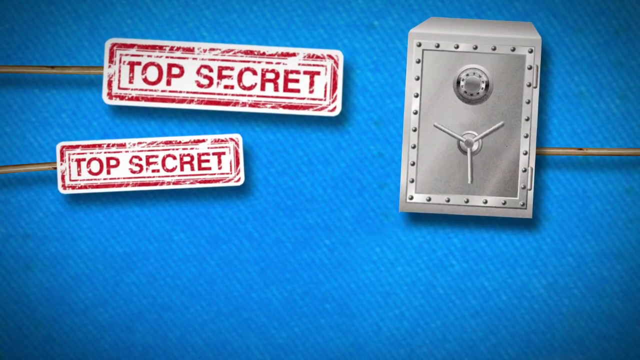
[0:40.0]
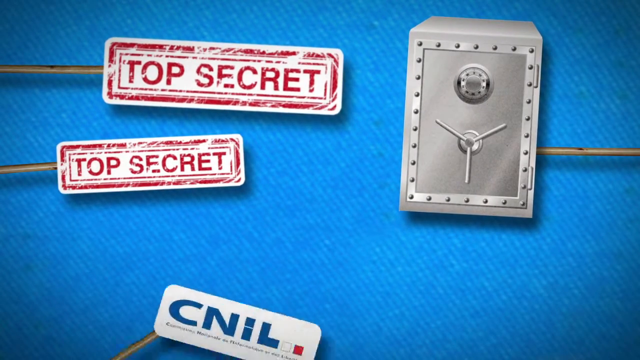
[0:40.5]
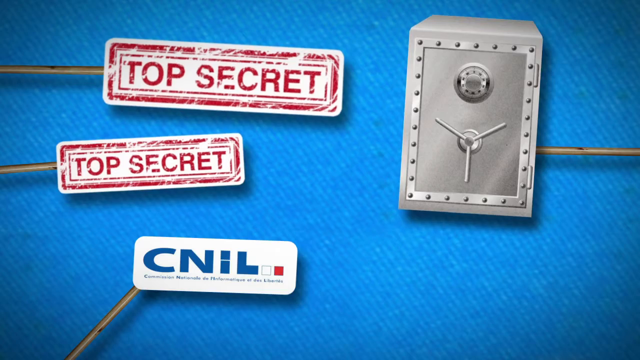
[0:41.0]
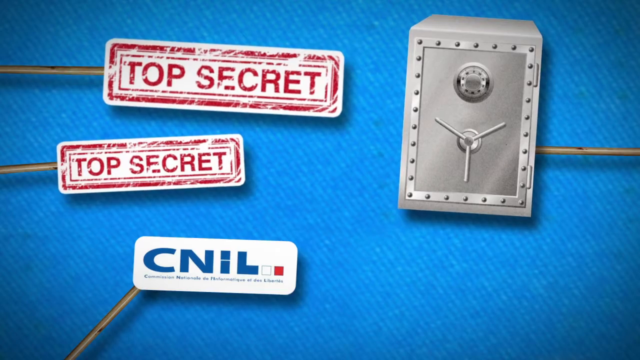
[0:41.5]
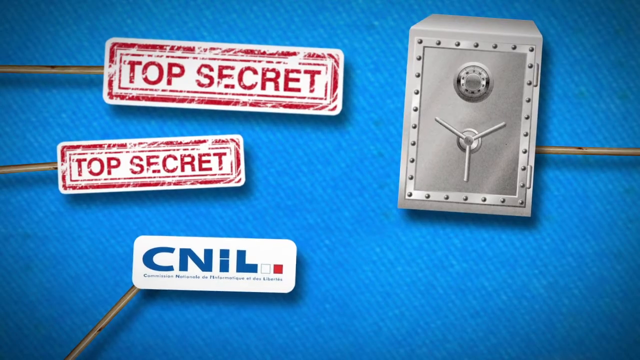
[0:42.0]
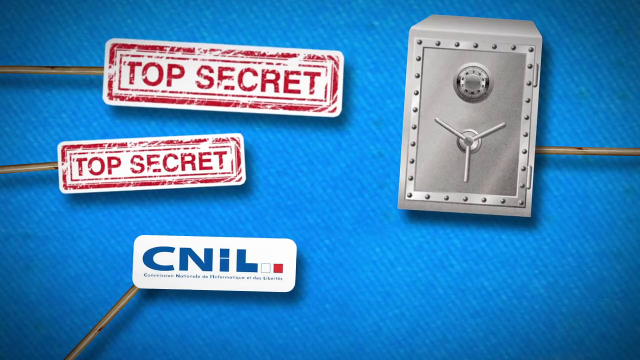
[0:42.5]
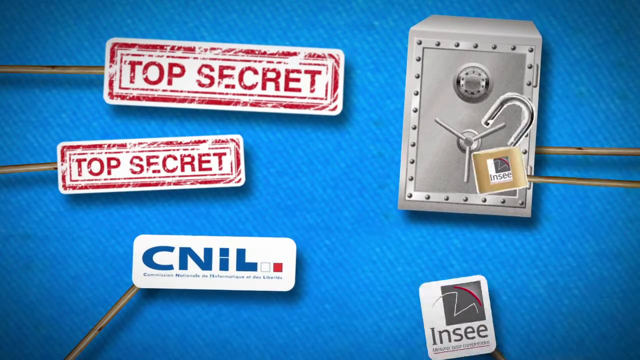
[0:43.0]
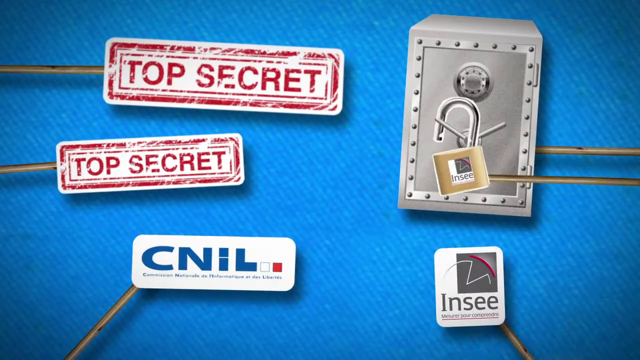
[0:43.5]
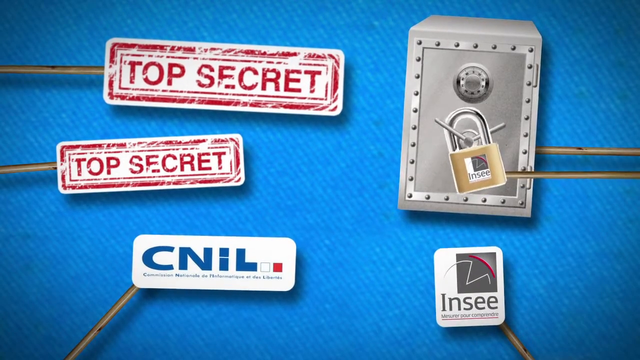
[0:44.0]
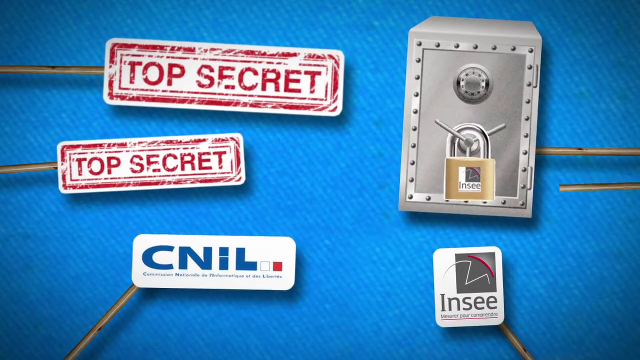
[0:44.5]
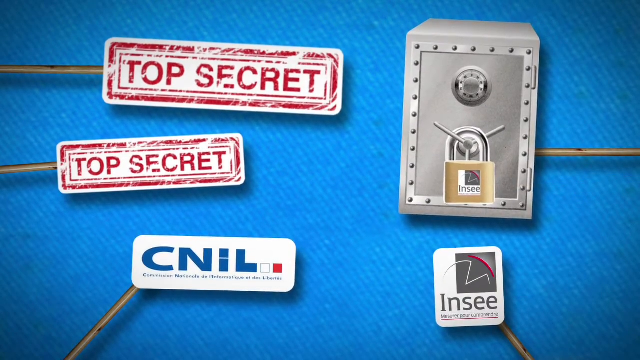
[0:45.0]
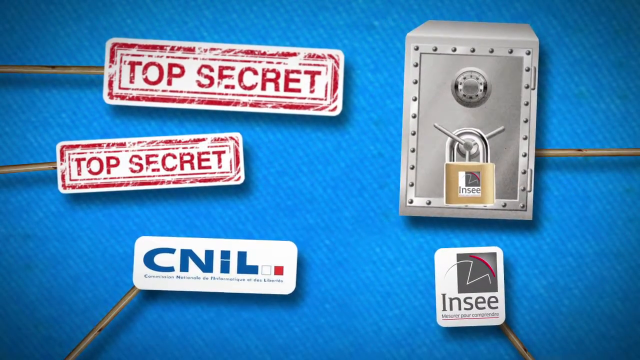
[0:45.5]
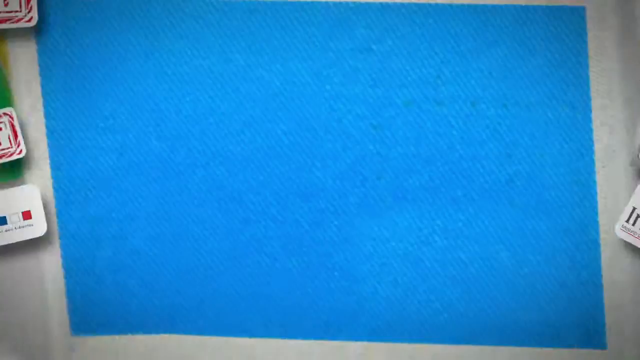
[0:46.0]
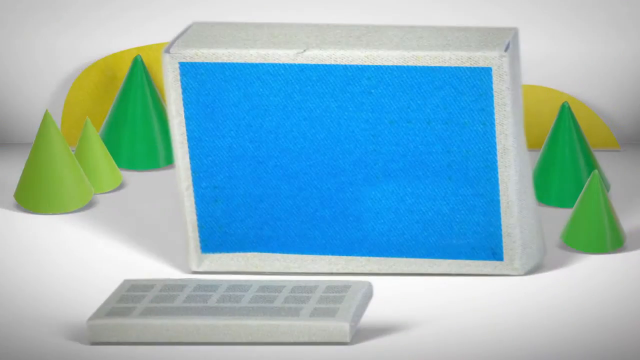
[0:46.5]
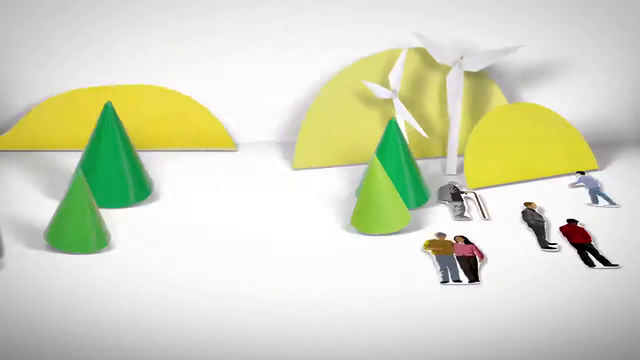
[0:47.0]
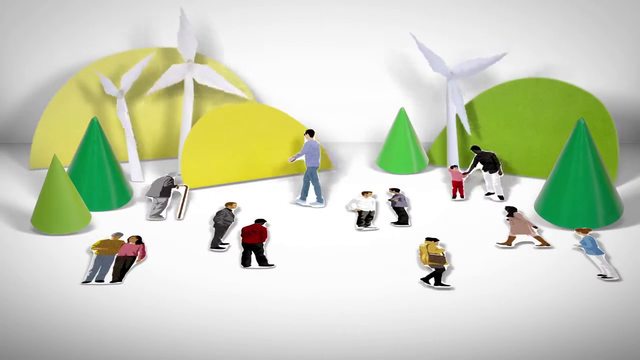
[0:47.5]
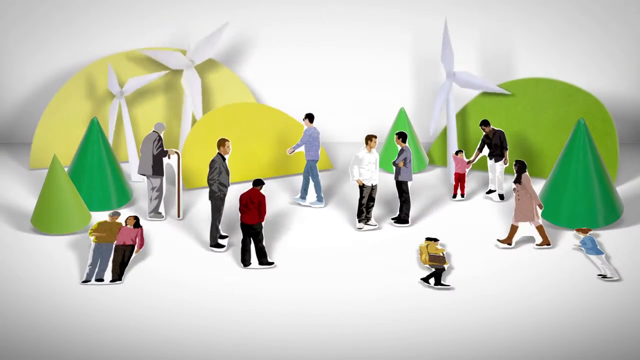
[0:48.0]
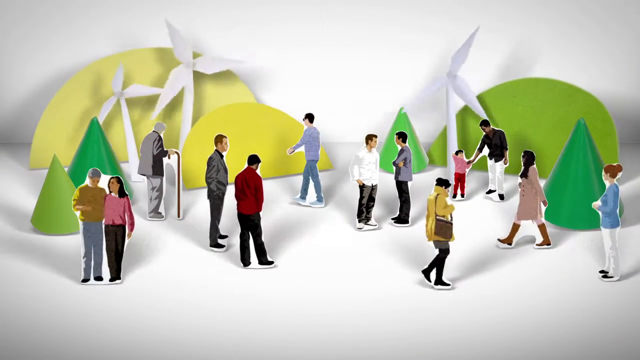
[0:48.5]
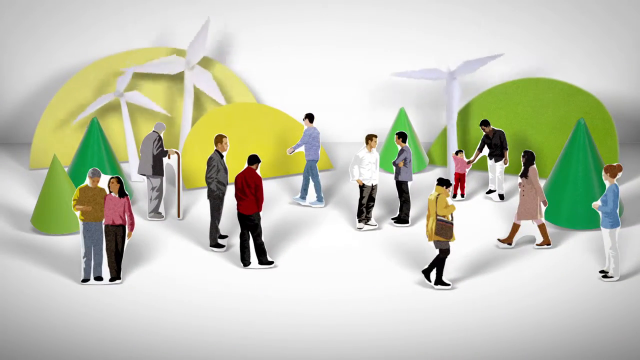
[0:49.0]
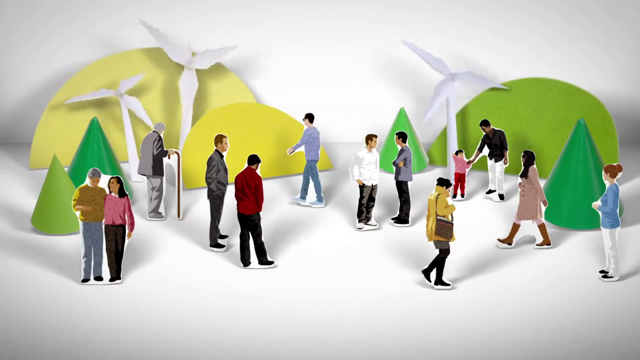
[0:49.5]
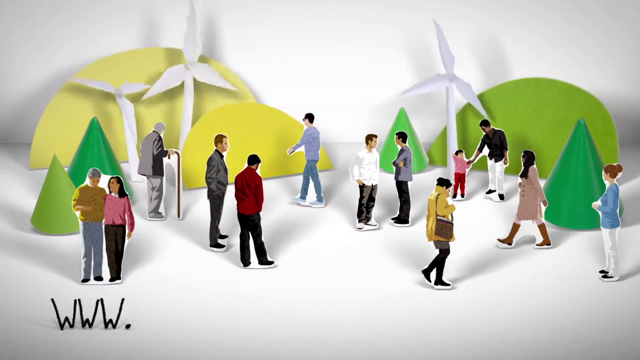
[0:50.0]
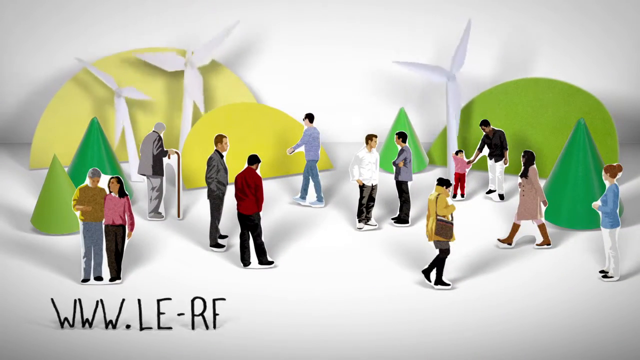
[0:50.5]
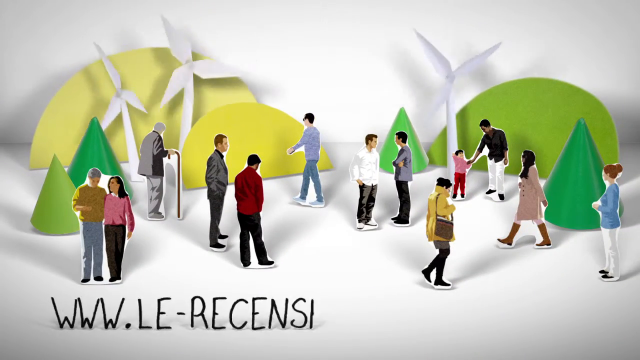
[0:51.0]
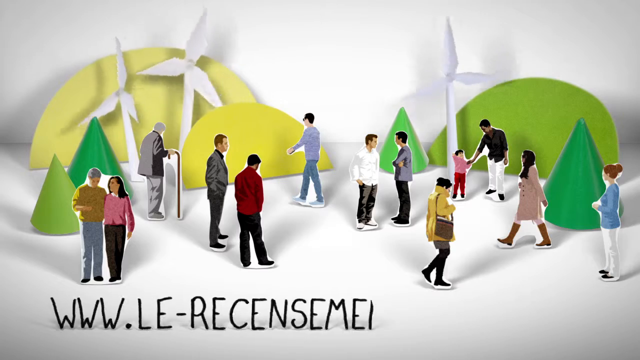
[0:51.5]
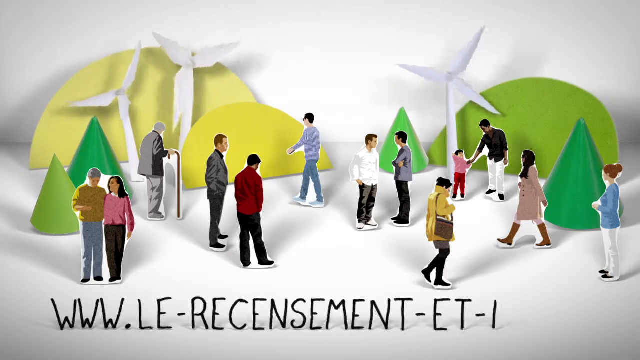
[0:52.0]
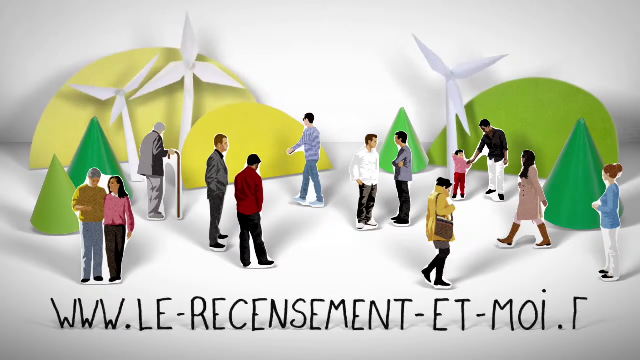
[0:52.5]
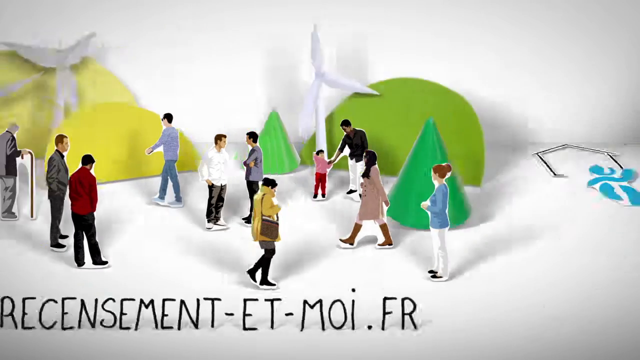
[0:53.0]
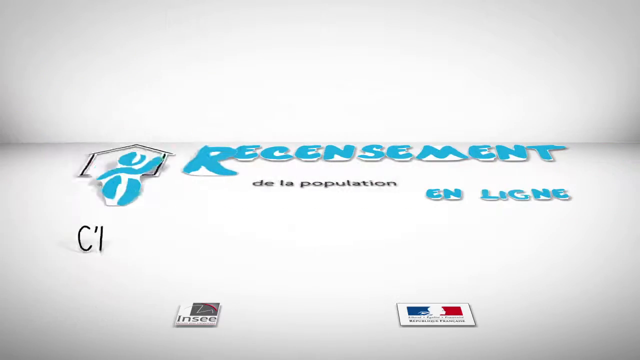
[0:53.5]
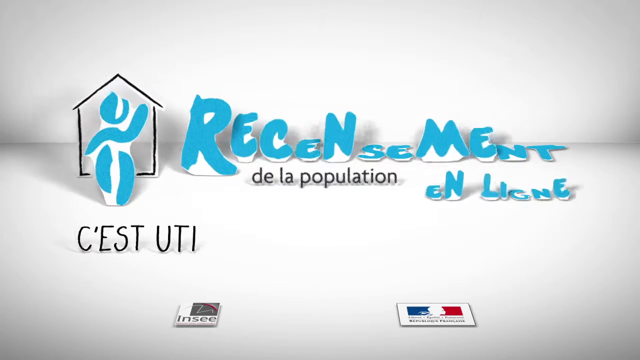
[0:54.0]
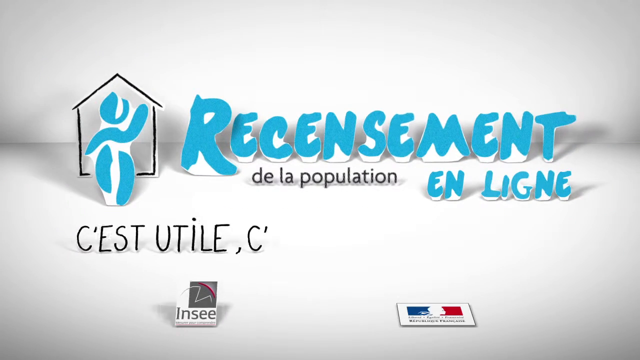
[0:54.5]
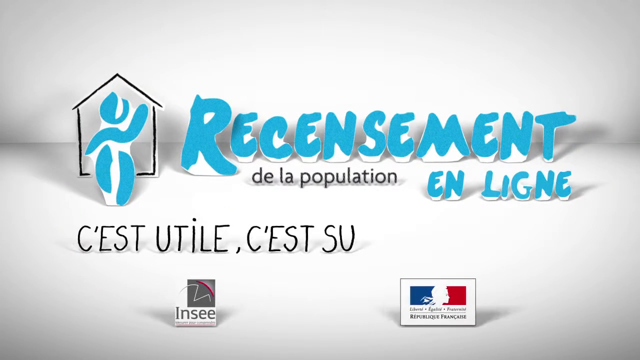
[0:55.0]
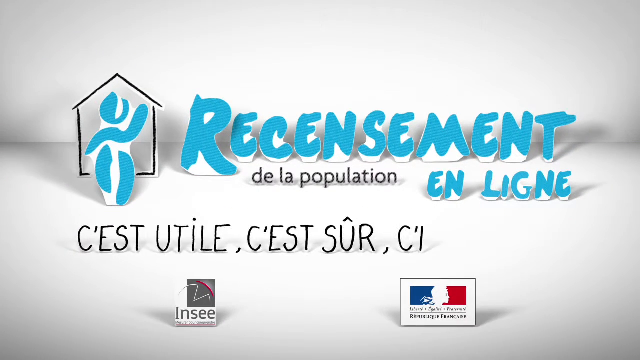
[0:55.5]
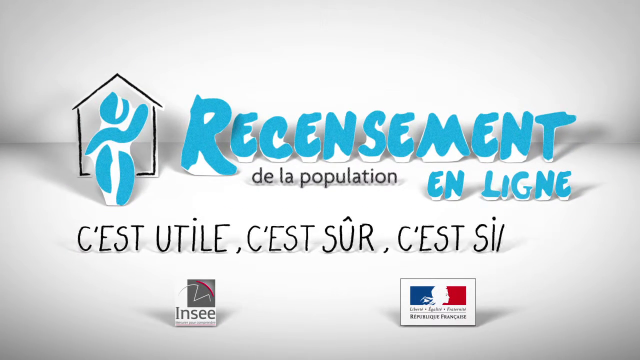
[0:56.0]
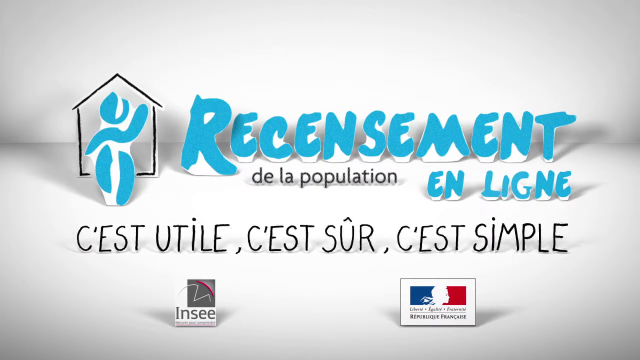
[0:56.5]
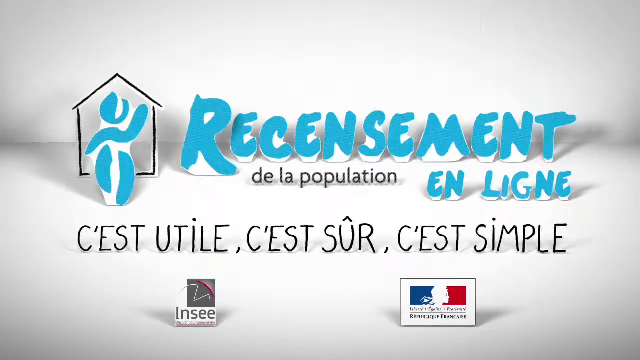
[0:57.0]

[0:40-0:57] This part conveys that information submitted to the website is kept secure and top secret. Two graphics read "Top Secret" in capital letters, resembling a red ink pad stamp. On the right-hand side is a graphic of a safe, and in the lower left-hand corner is the logo of an organization with the abbreviation "CNIL." A padlock is locked onto the front of the safe, and another logo, for a company called INSEE, appears beneath that. The image then scrolls to a paper doll cutout illustration of several different citizens standing around with windmills and trees in the background, and a website address ending in ".fr" scrolls across the bottom of the screen. The scene then scrolls to the right, showing the same image from the beginning.